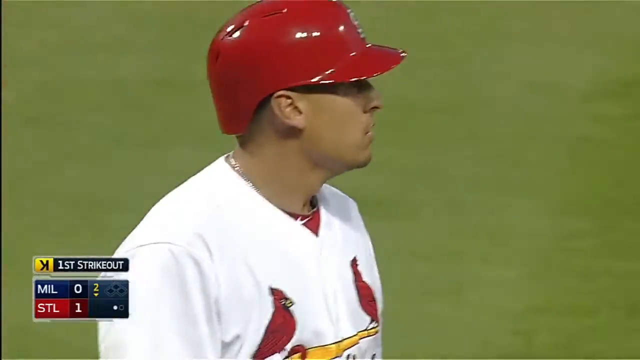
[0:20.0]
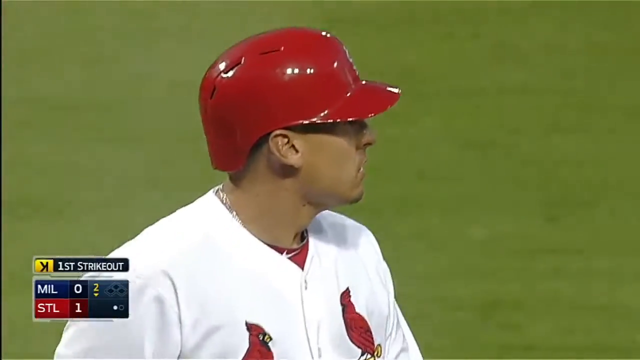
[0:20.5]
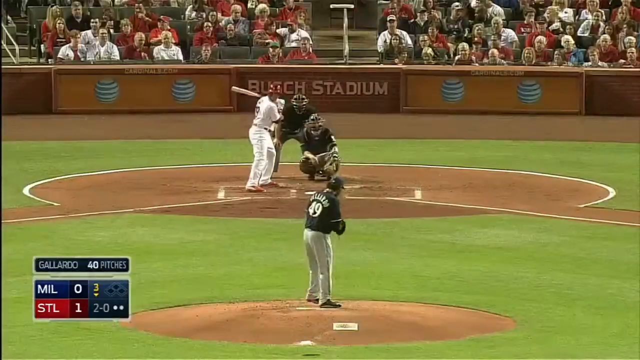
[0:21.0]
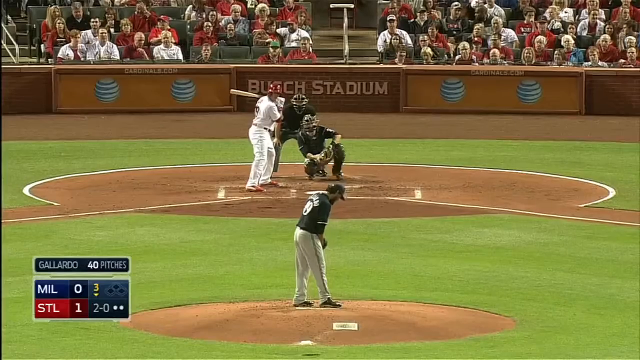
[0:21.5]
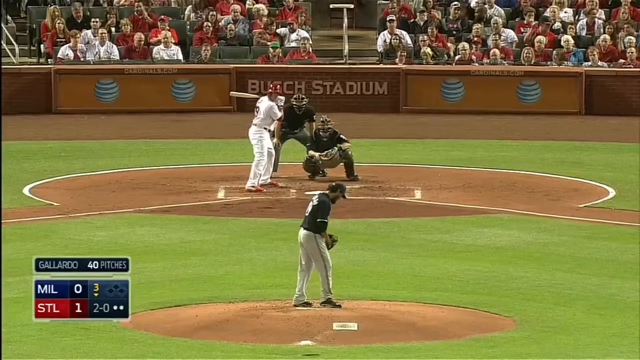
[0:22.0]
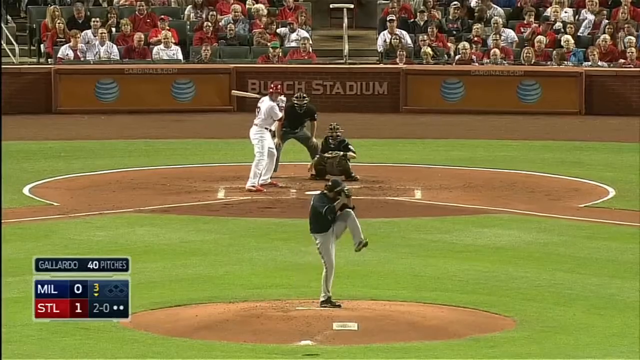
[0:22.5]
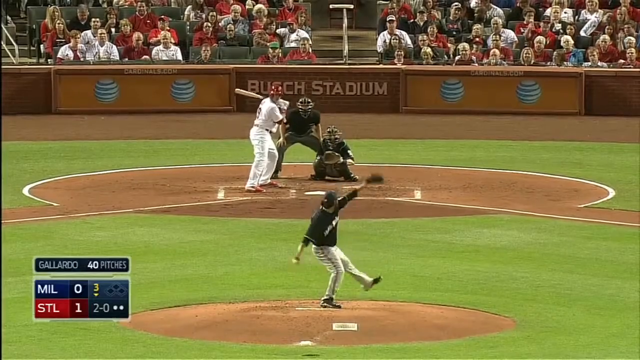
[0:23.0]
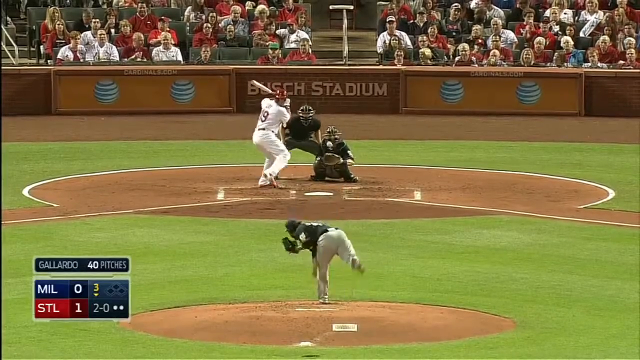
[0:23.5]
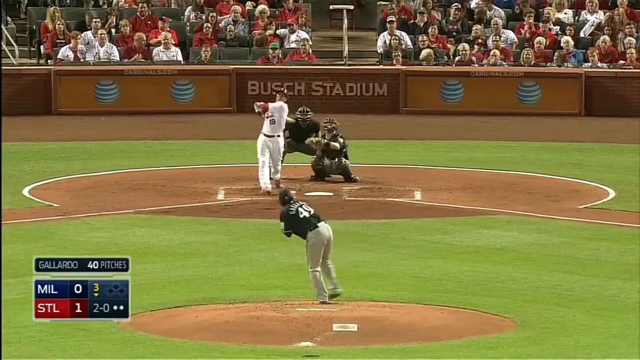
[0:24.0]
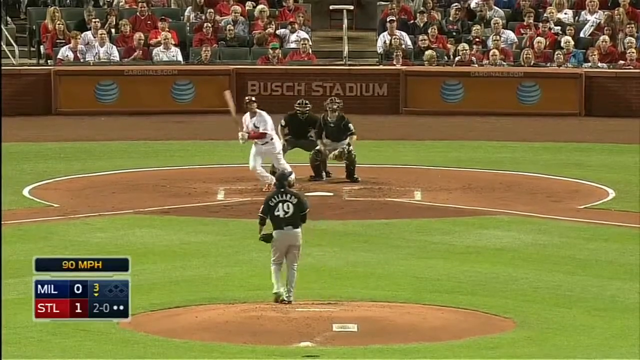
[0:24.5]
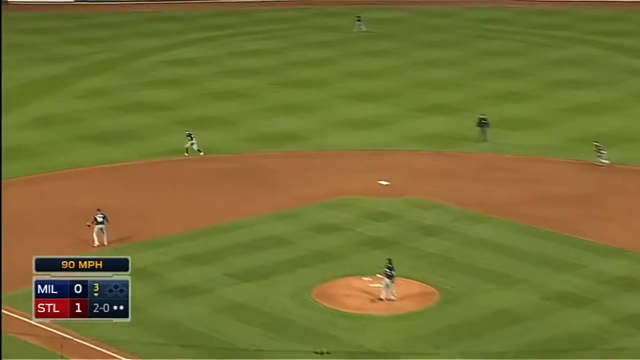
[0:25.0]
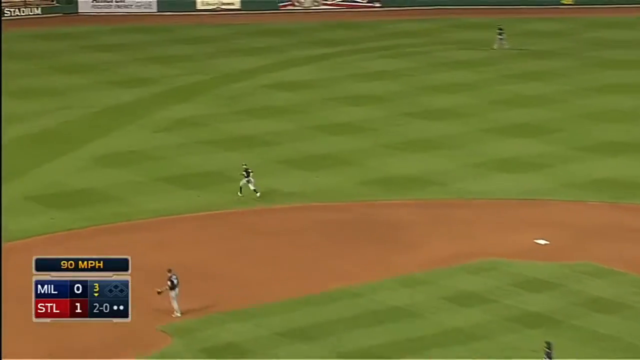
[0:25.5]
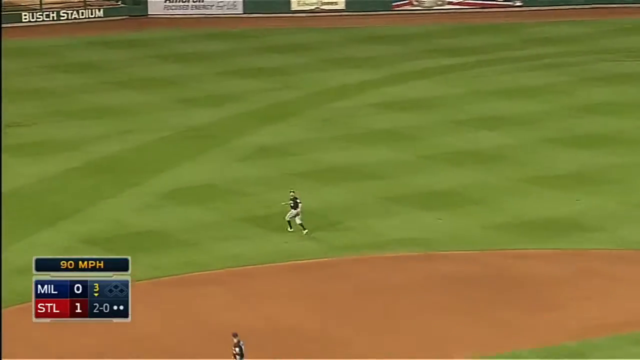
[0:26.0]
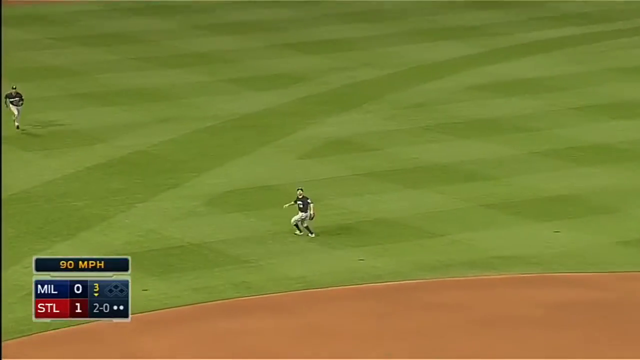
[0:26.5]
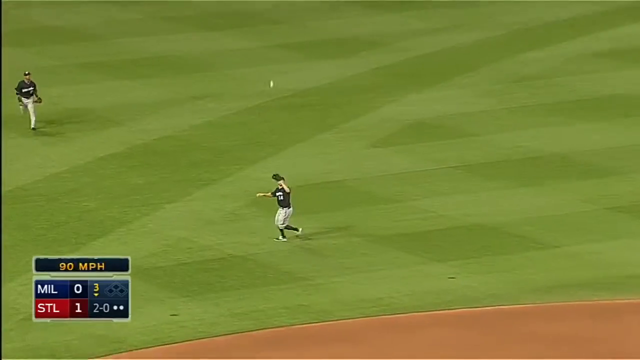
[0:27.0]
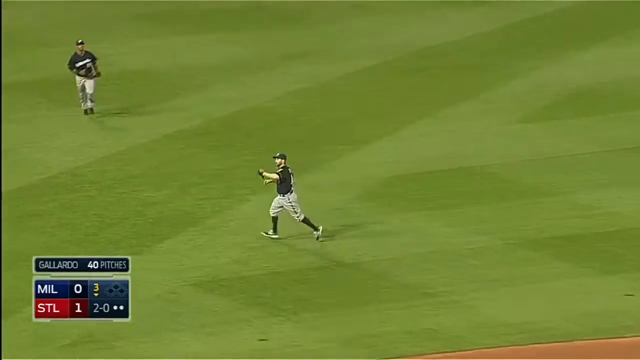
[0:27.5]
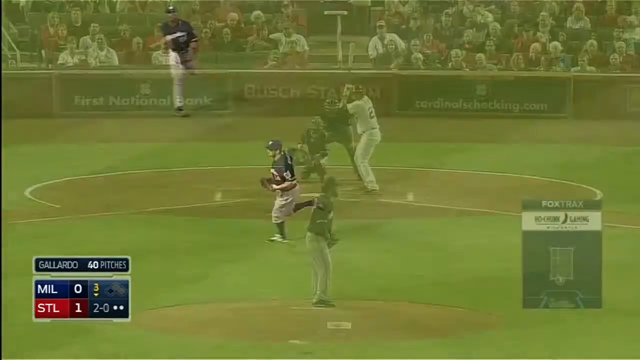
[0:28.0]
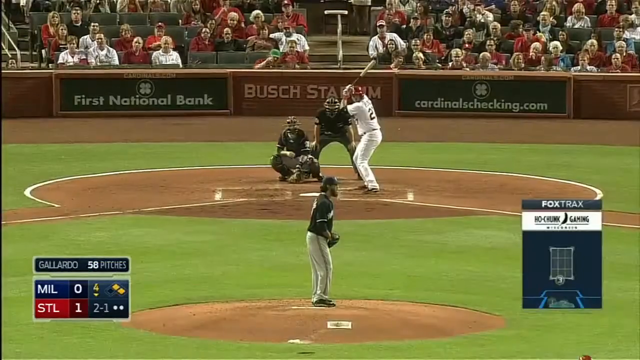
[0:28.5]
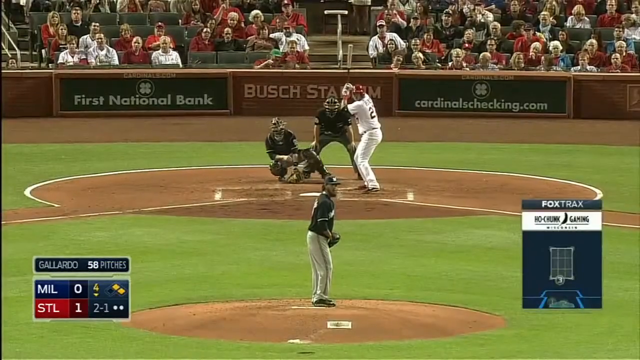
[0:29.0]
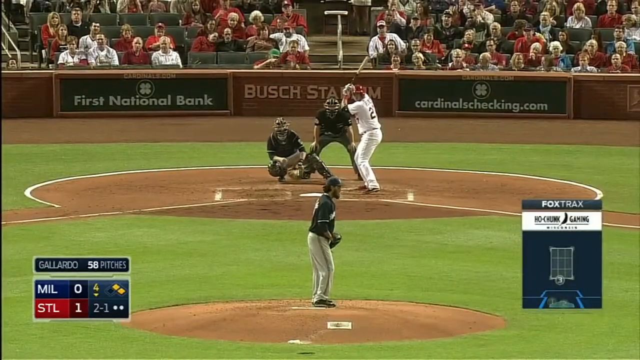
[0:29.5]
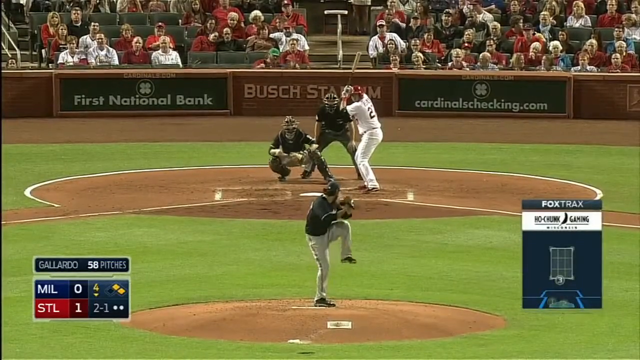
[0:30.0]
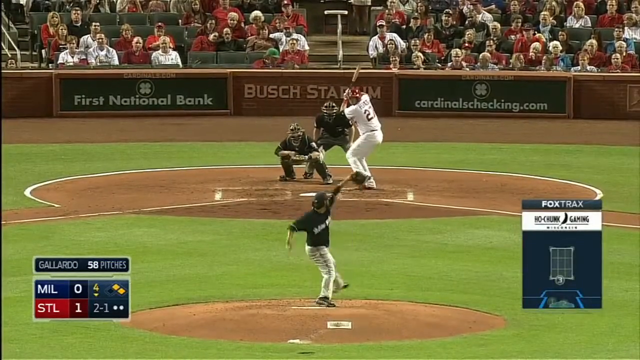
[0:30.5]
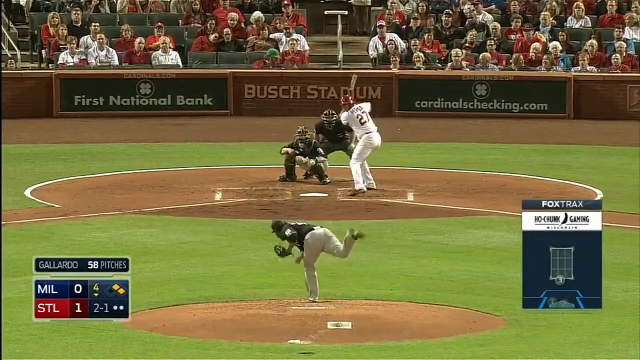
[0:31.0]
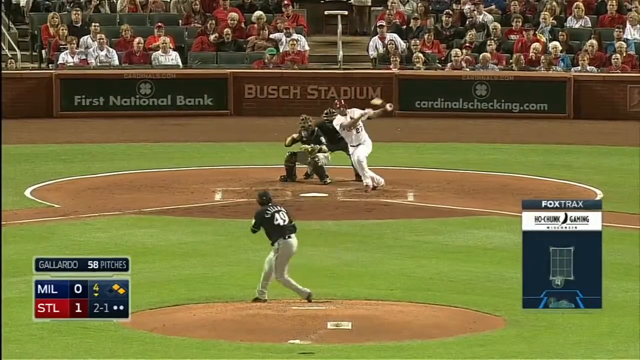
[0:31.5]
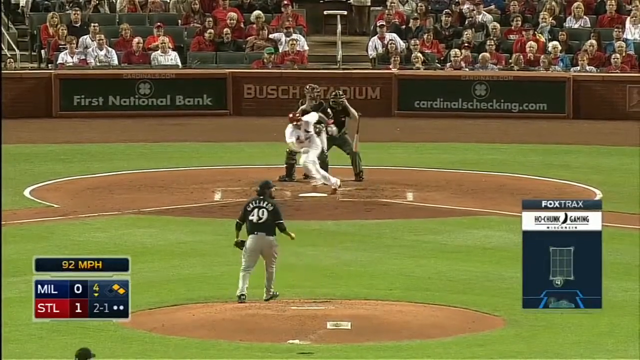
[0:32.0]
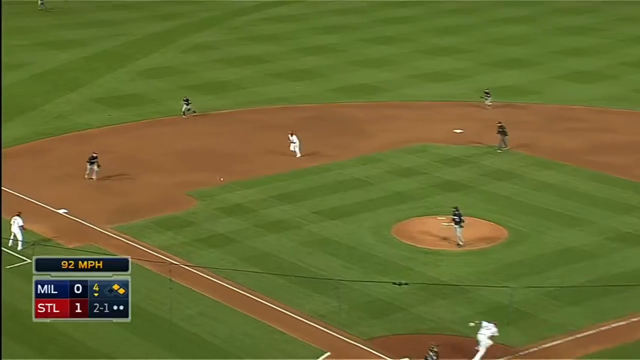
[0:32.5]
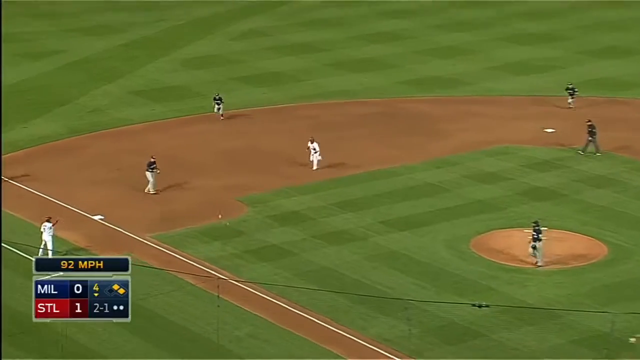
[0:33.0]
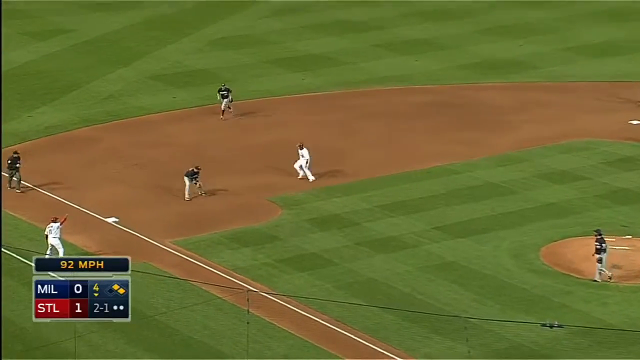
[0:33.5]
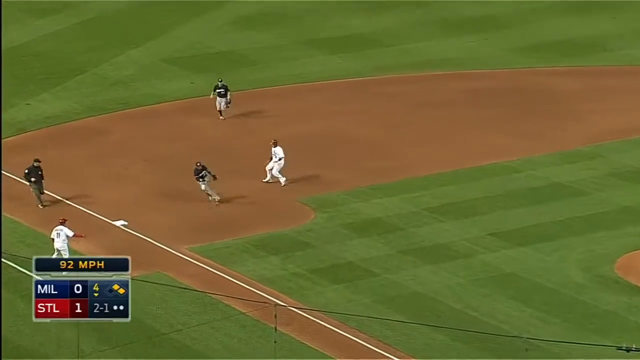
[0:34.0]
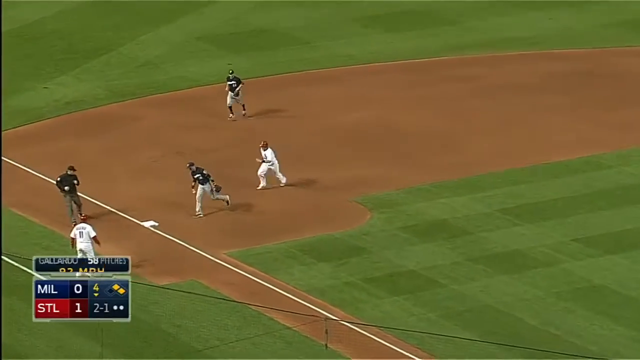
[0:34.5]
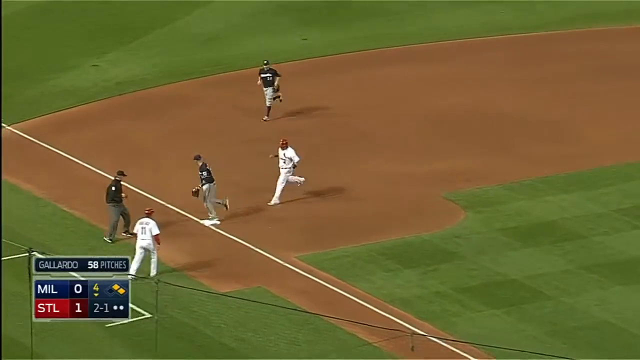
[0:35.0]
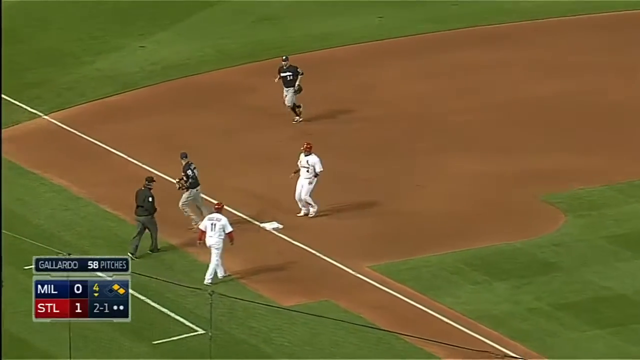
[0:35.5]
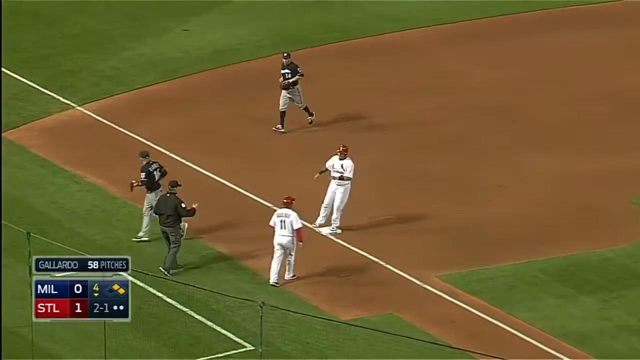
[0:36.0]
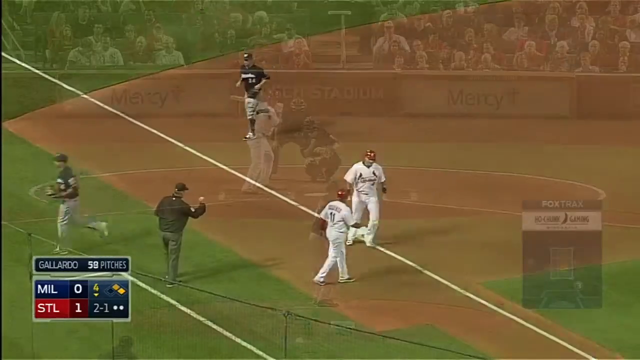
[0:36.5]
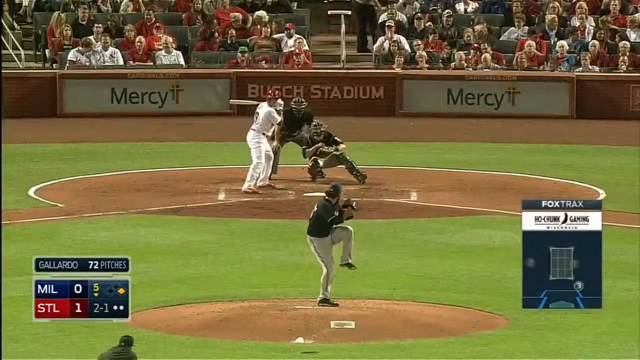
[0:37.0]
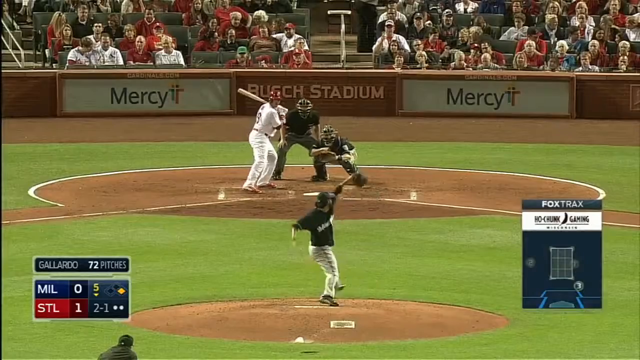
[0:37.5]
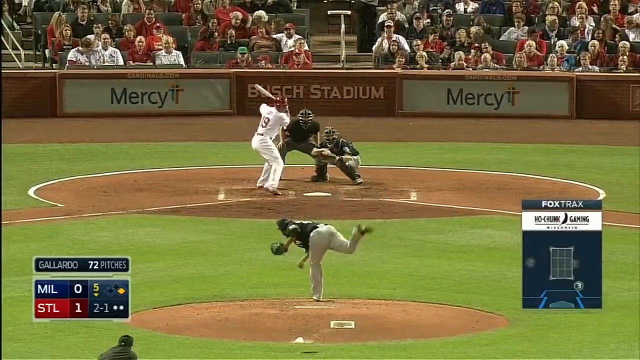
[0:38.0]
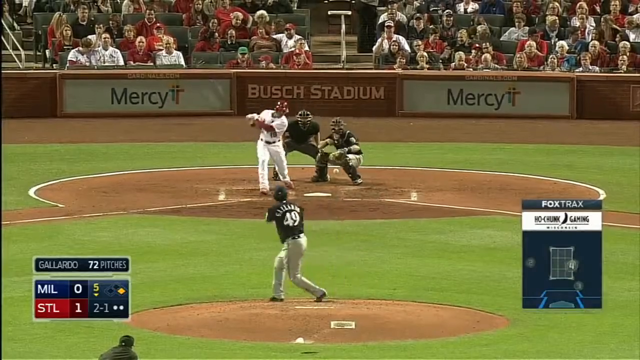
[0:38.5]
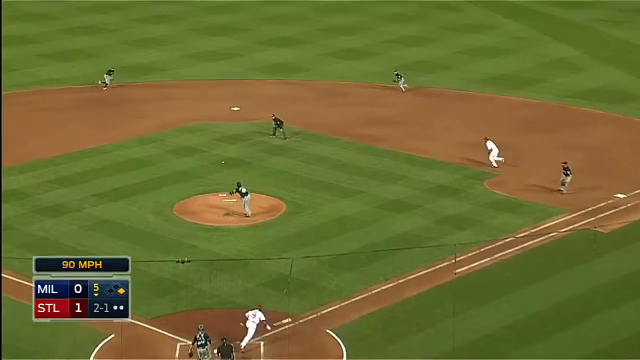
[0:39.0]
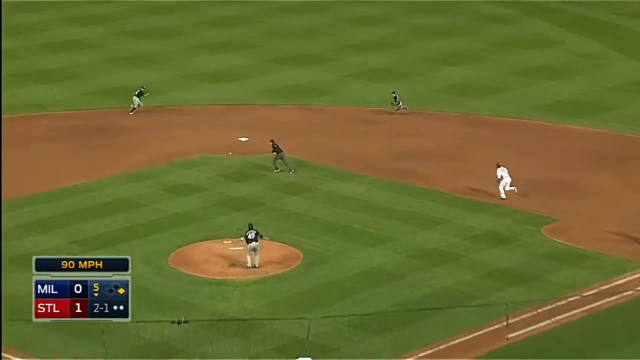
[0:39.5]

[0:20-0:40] The live baseball game continues with the Cardinals batting. A batter hits the ball to the left side of the field and a Milwaukee player catches it right away. Another Cardinal hits the ball near third base; it is caught and the Cardinal is out, and the Milwaukee player runs into third base. Another ball goes near second base and everybody runs. The batter wears a red hard helmet, and the umpire stands behind the catcher. The field is mowed so that it looks like boxes of grass, some darker than others. The signs on either side of Bush Stadium say "mercy", then change to another advertisement, then to AT&T advertisements, and then to First National Bank.